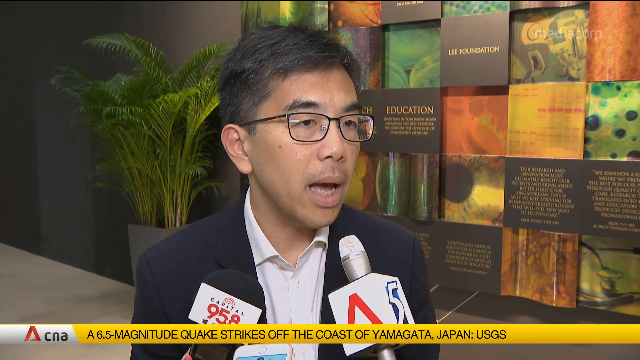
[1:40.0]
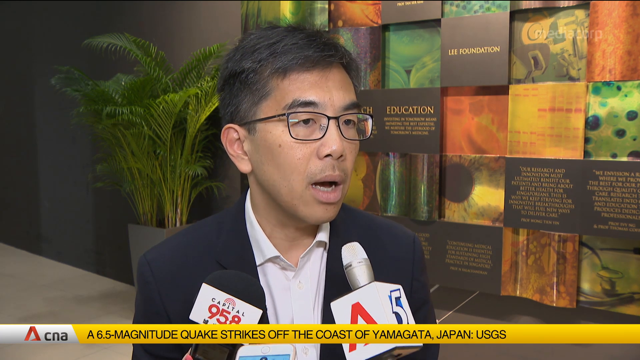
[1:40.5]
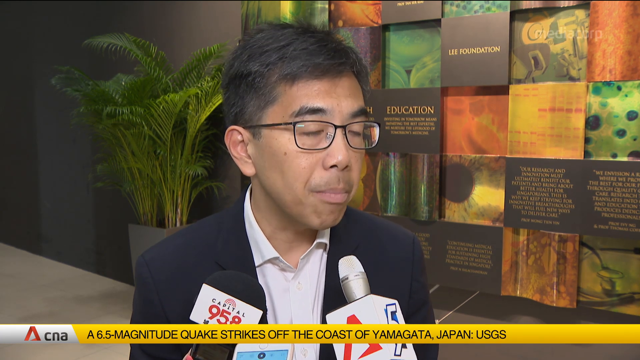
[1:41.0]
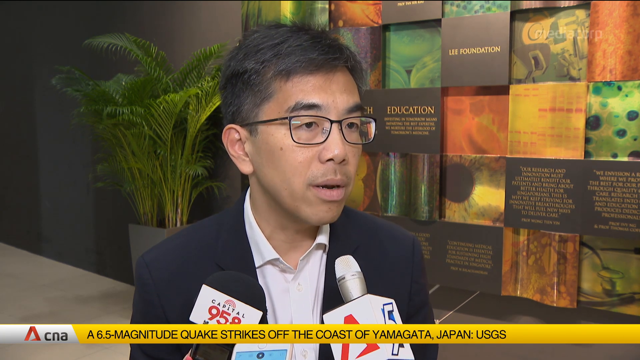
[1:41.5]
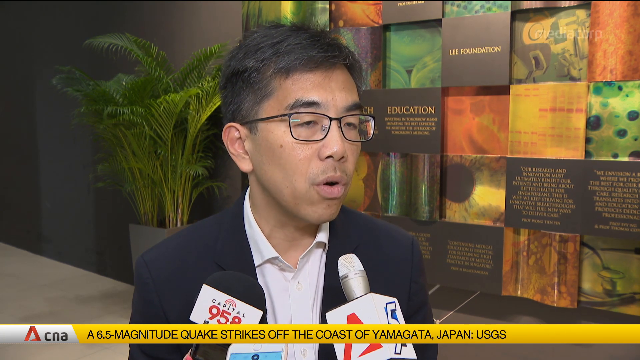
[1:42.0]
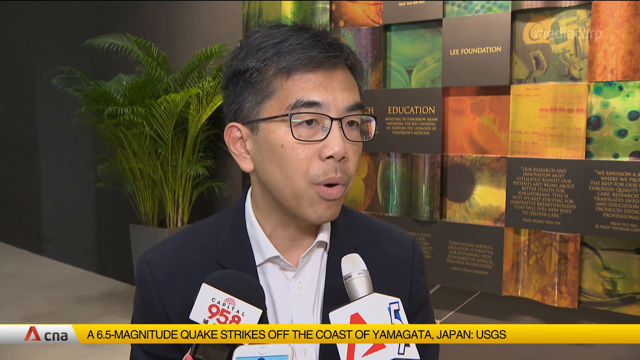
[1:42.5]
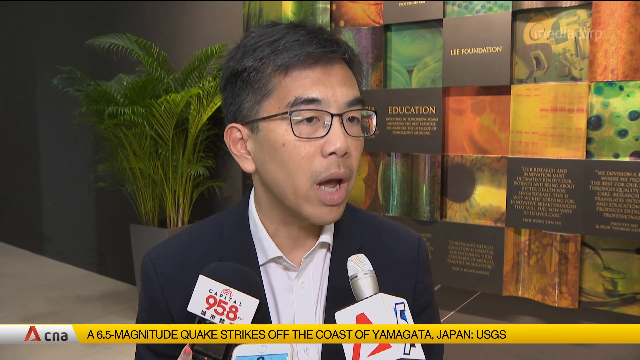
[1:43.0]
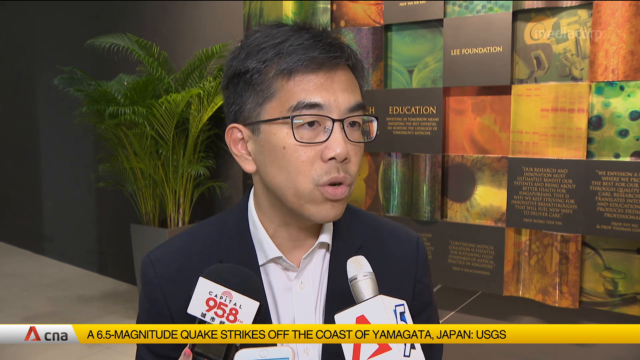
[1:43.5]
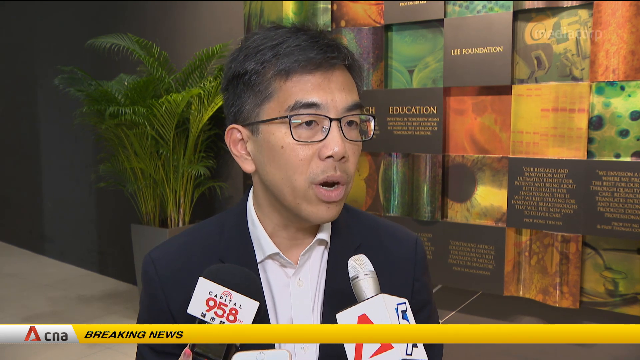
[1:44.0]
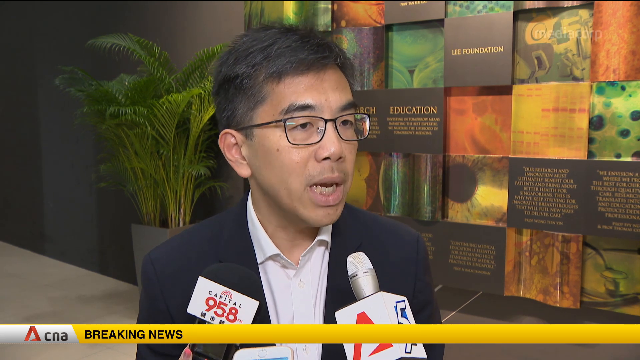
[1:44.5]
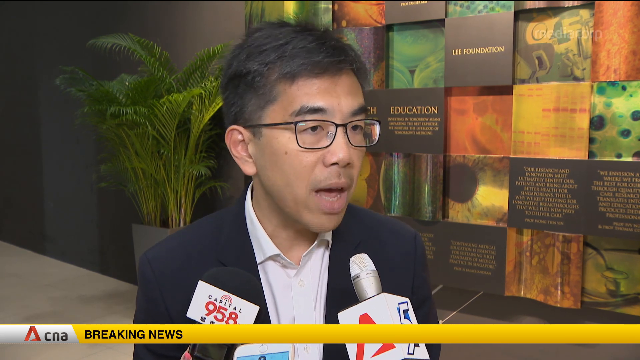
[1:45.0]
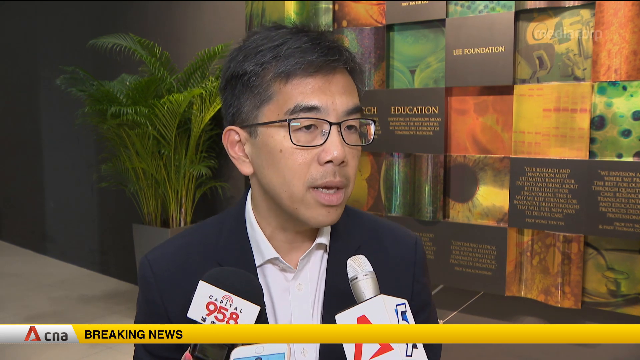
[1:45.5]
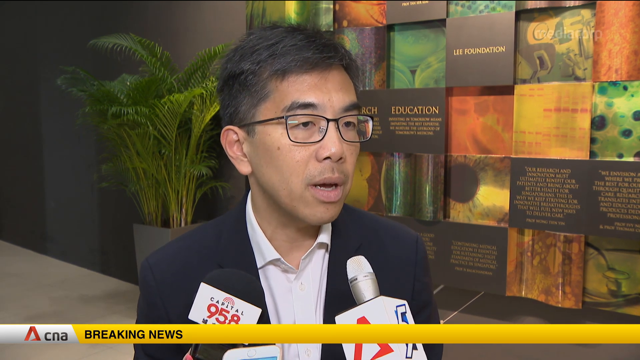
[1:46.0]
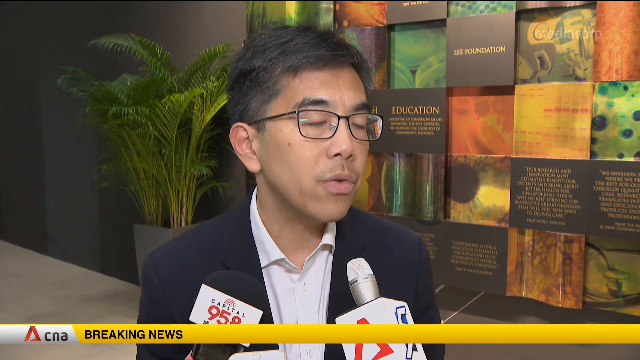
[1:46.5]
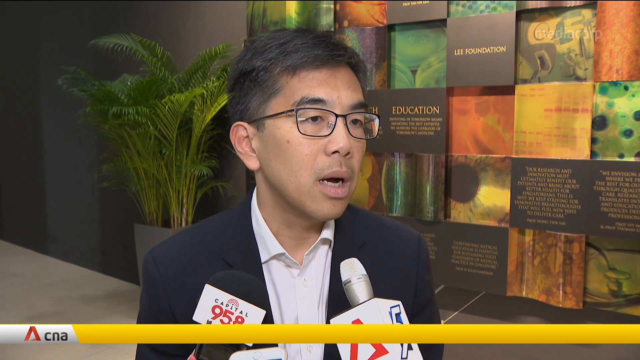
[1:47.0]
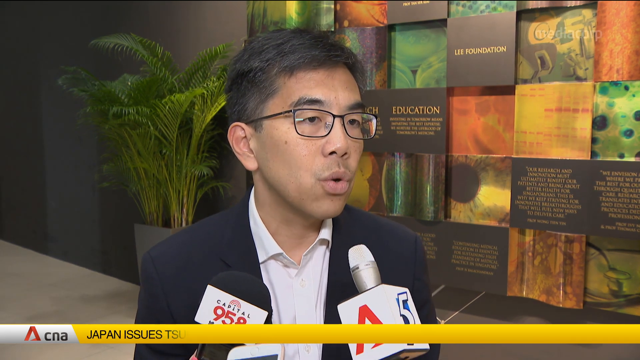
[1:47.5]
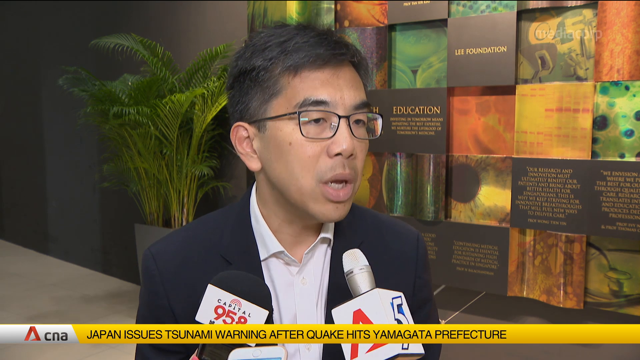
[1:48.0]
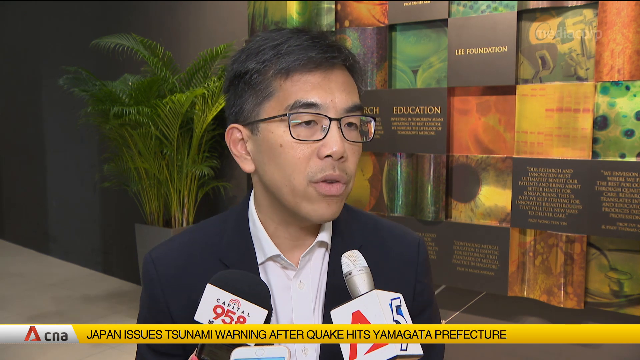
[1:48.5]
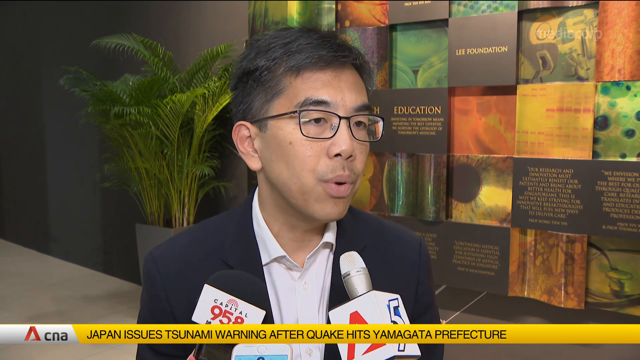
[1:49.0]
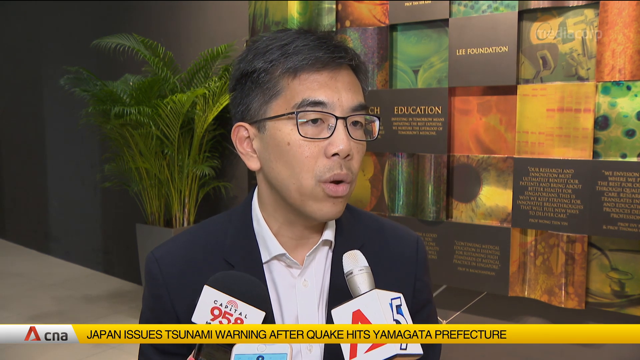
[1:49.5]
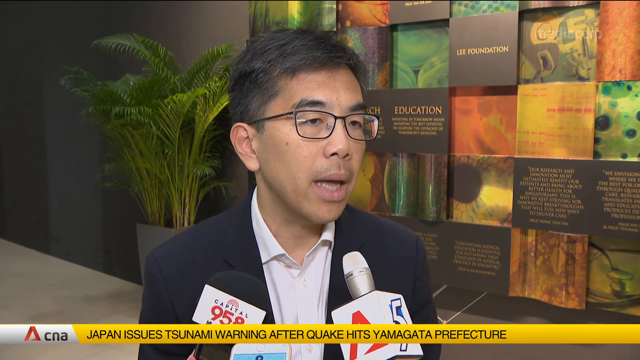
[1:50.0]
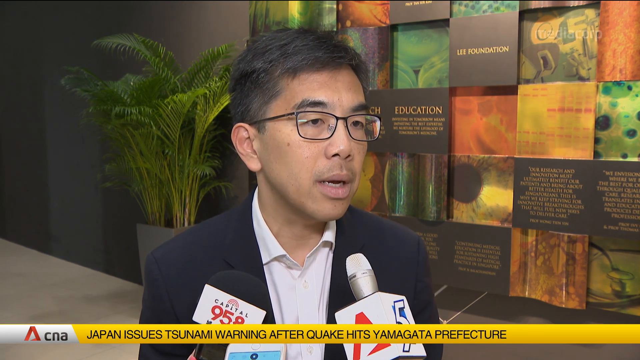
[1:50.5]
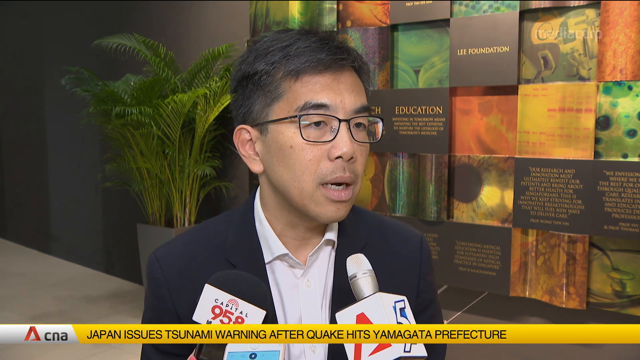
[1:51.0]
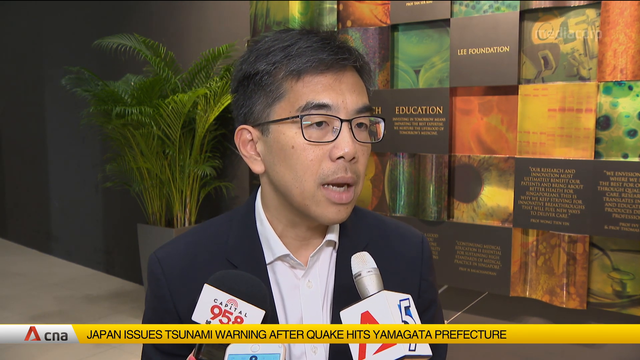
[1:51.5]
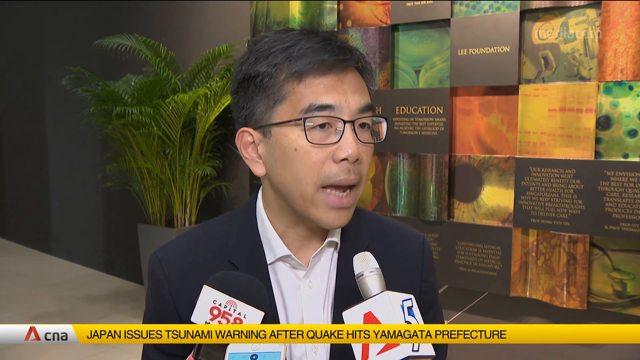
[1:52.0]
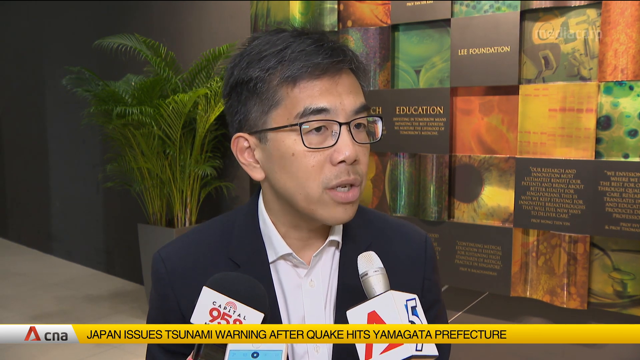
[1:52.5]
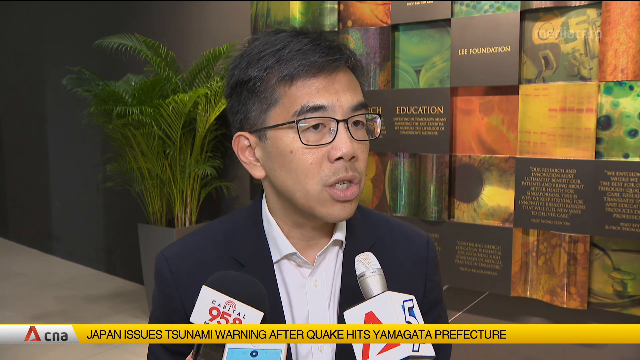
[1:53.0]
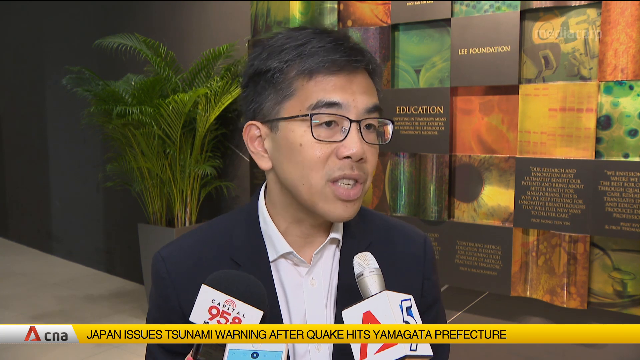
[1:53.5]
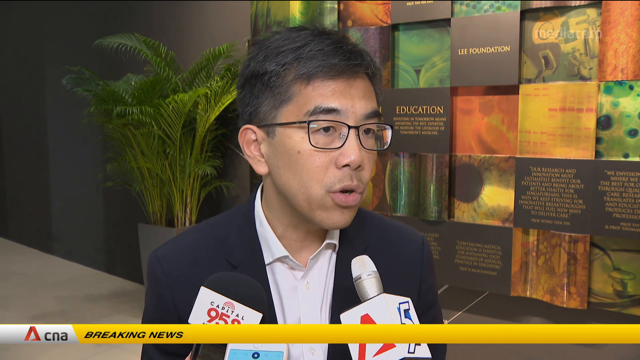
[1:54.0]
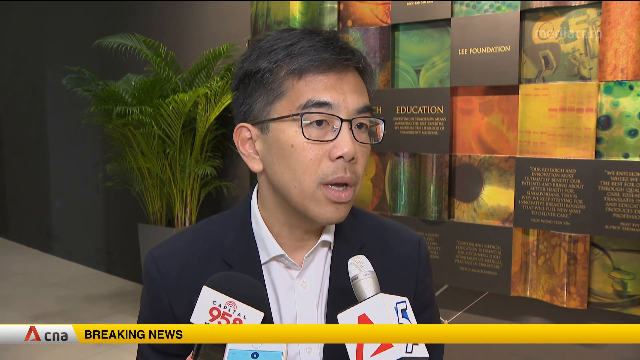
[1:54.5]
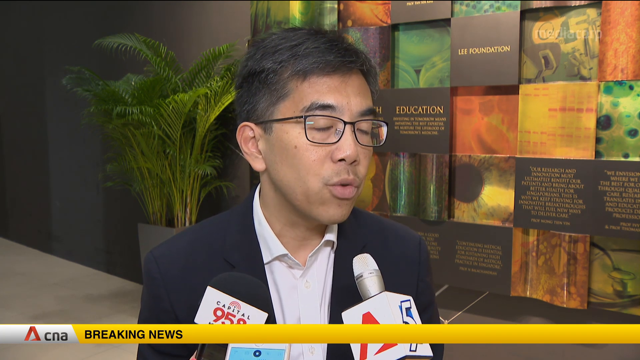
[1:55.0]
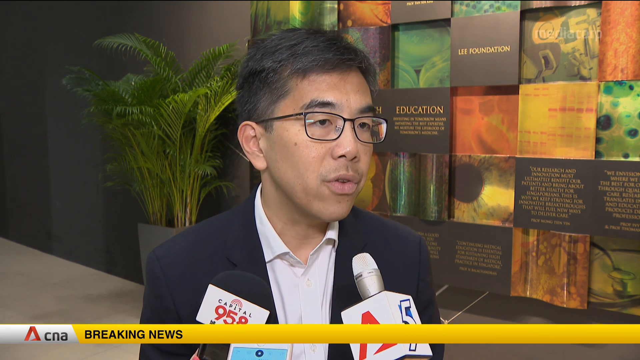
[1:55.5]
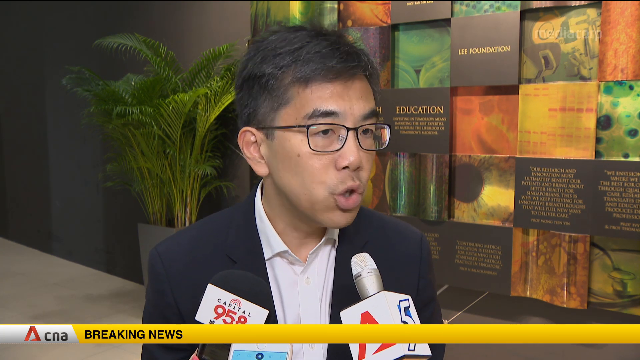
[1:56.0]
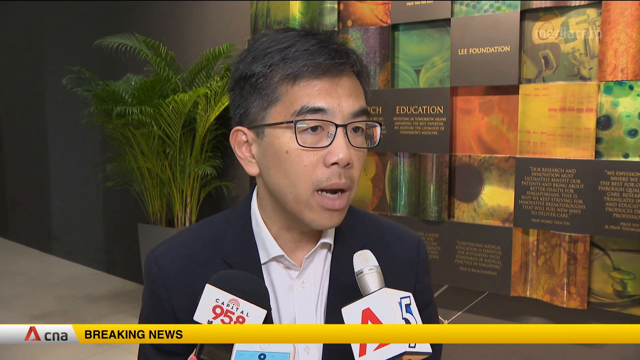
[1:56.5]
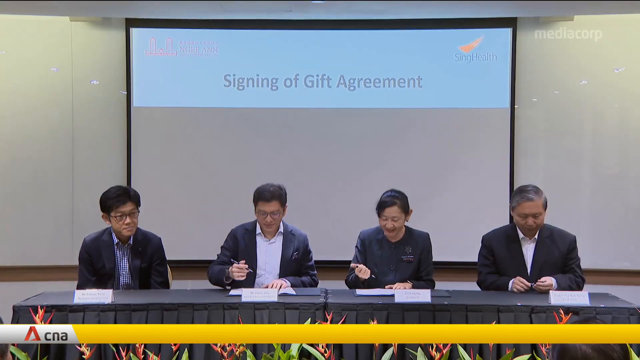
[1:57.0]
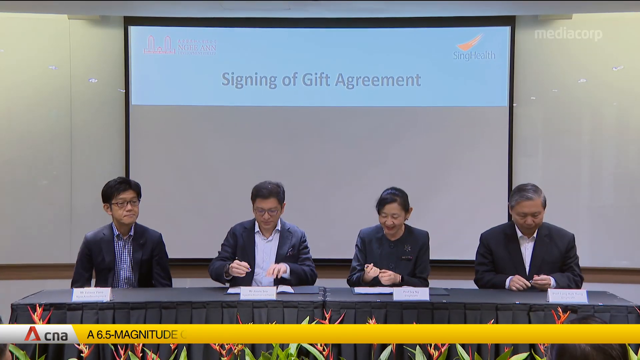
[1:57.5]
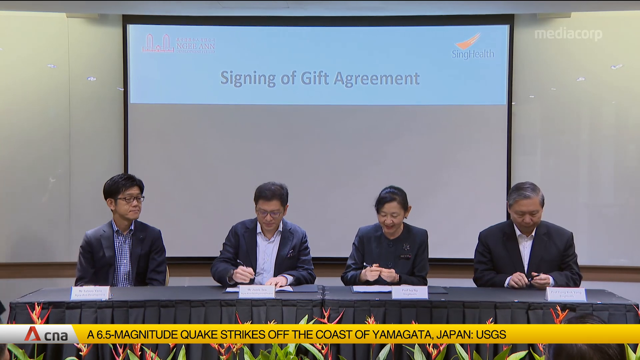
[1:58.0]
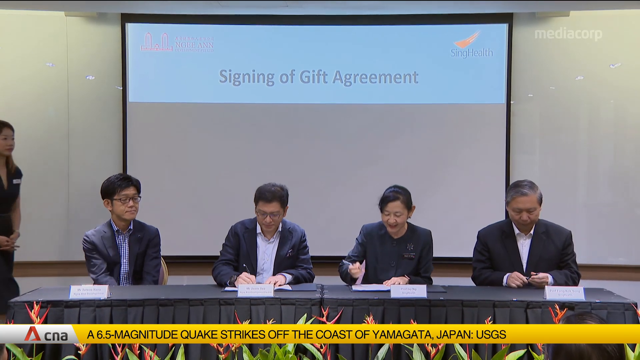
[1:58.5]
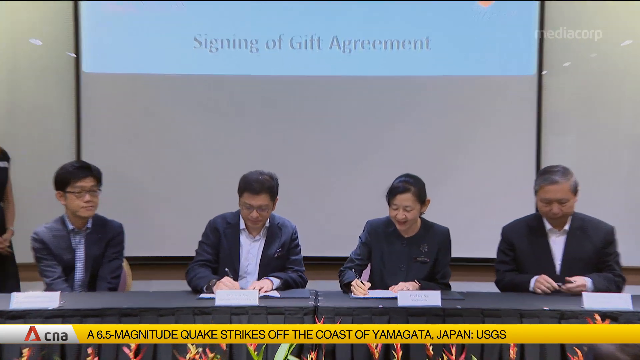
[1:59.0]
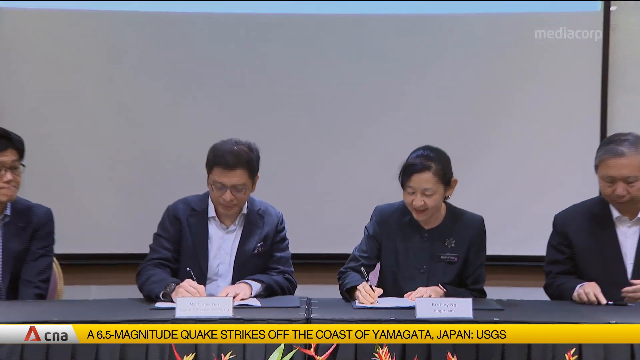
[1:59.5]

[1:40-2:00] An Asian man is in the center, apparently being interviewed, with two microphones right in front of him. He wears a dark suit jacket over a white dress shirt with the top button undone, has black glasses and medium-length hair, and is very thin. He talks toward about the 5:30 direction, his head tilted slightly to his left, with a concerned, very serious look. The view then switches to a panel or presentation of some kind: a black horizontal table at the bottom, with four Asian people in business attire, all wearing black, sitting behind it facing the camera. A projector screen behind them has the title "signing of gift agreement" at the top, and the center two people are signing sheets of paper.